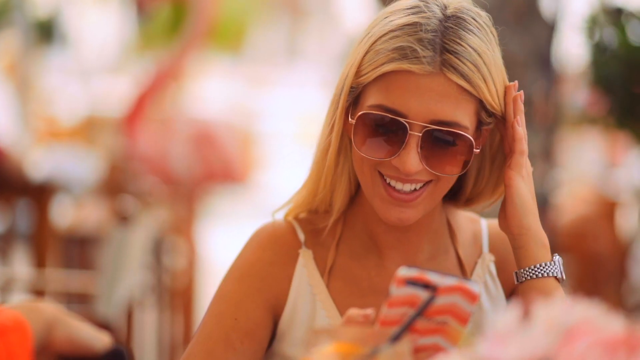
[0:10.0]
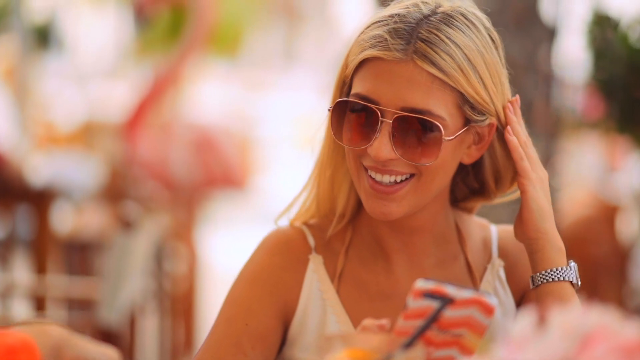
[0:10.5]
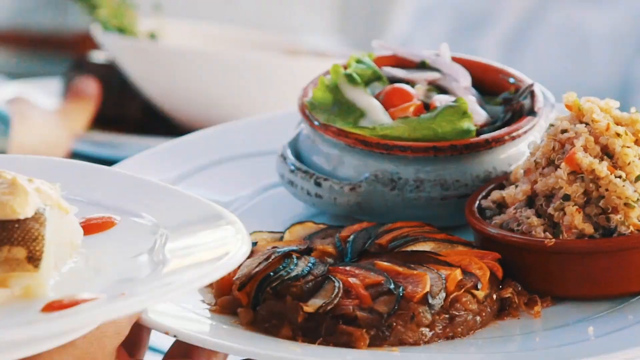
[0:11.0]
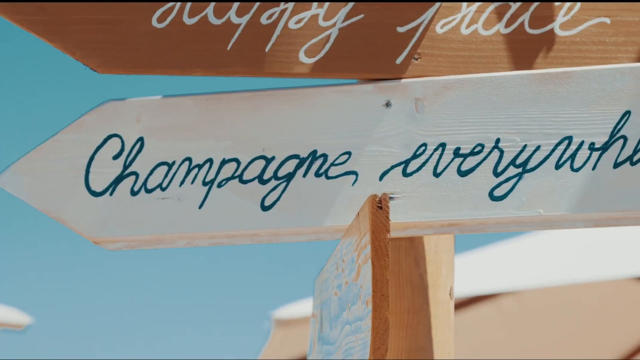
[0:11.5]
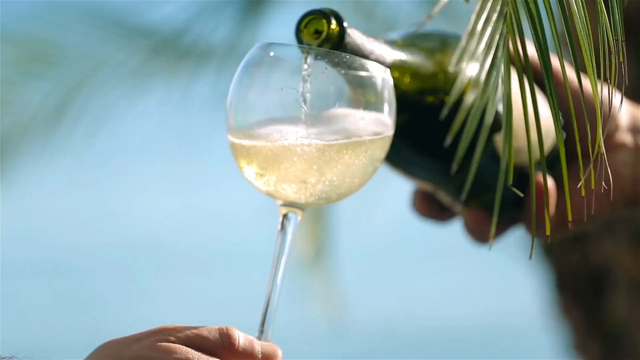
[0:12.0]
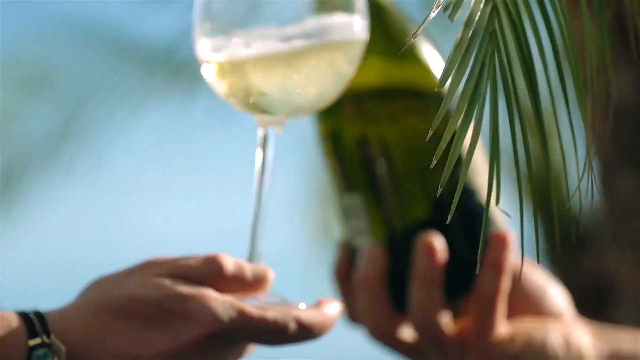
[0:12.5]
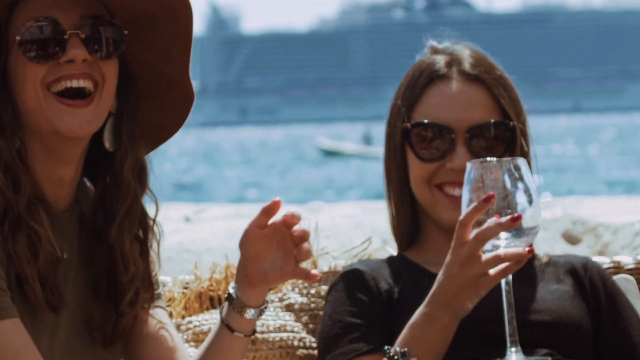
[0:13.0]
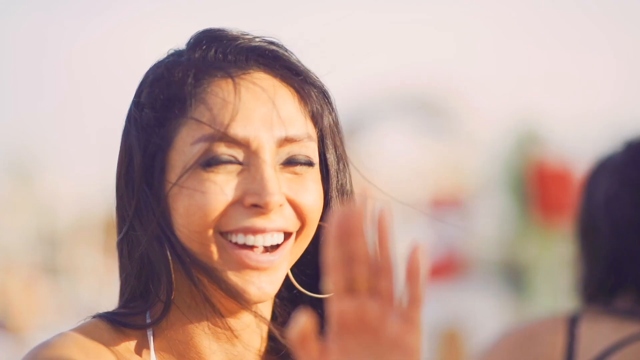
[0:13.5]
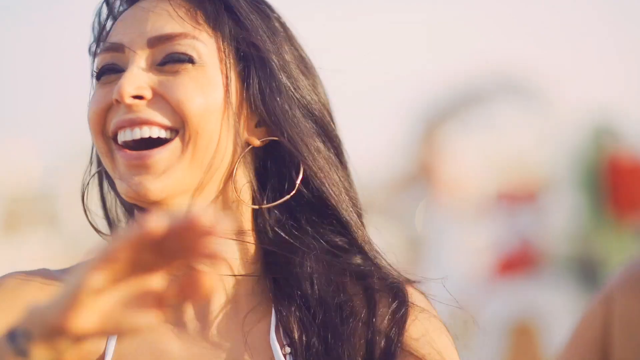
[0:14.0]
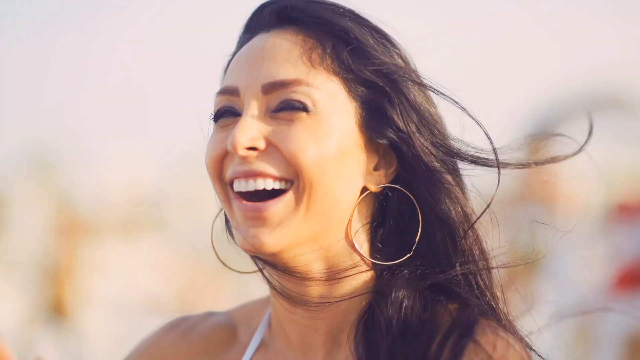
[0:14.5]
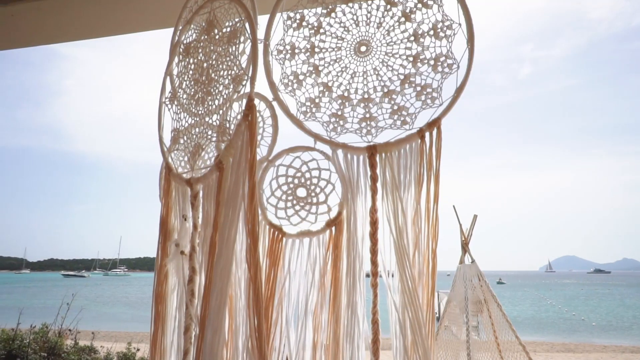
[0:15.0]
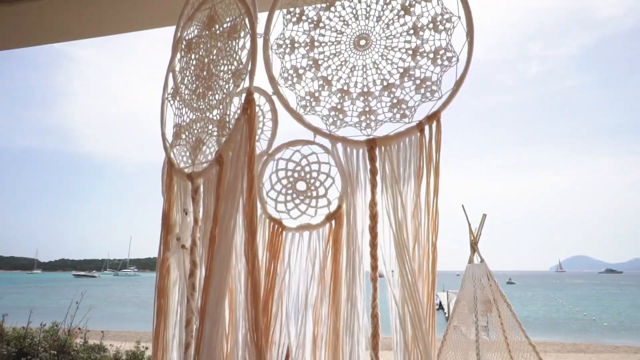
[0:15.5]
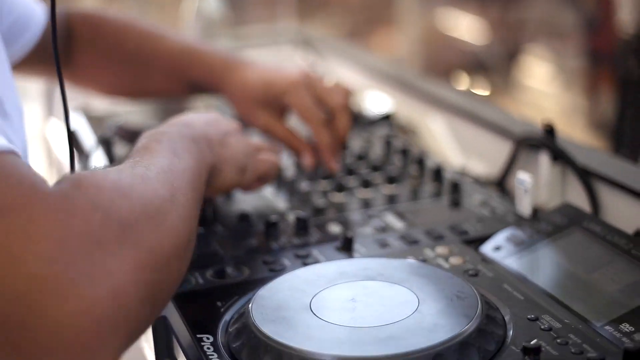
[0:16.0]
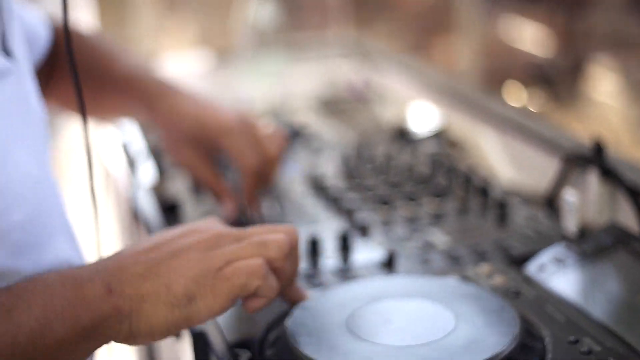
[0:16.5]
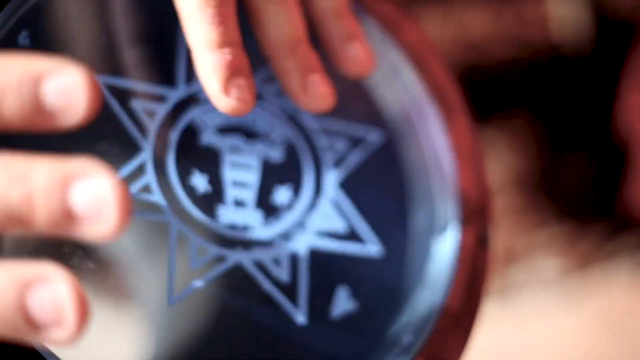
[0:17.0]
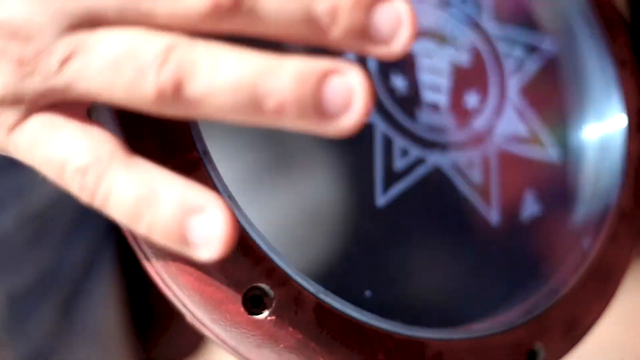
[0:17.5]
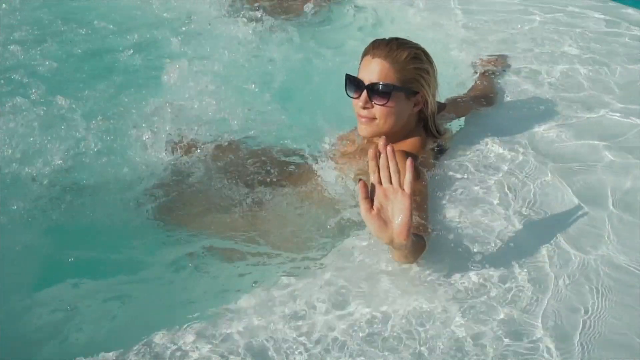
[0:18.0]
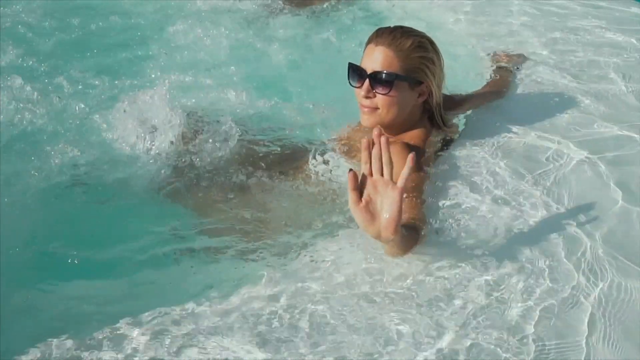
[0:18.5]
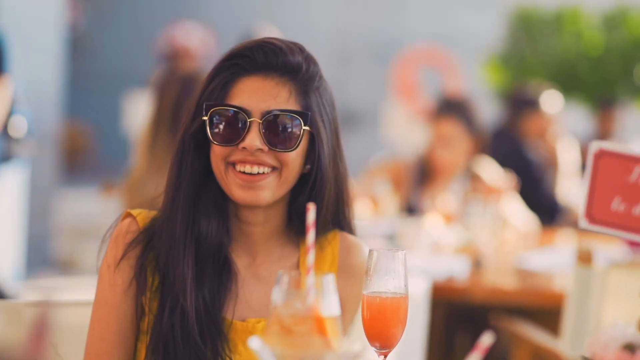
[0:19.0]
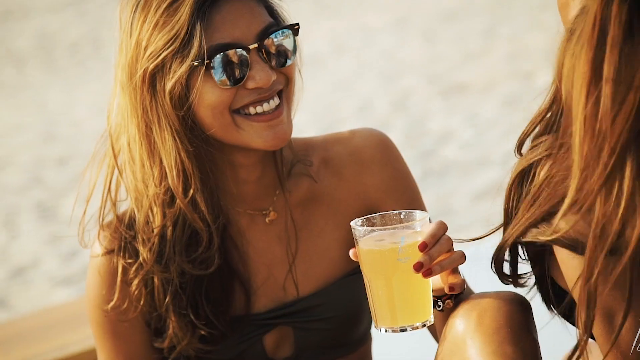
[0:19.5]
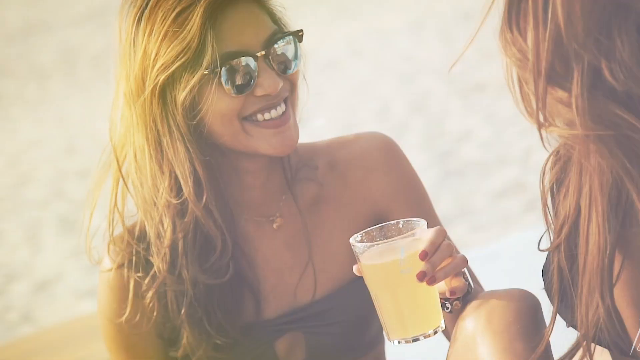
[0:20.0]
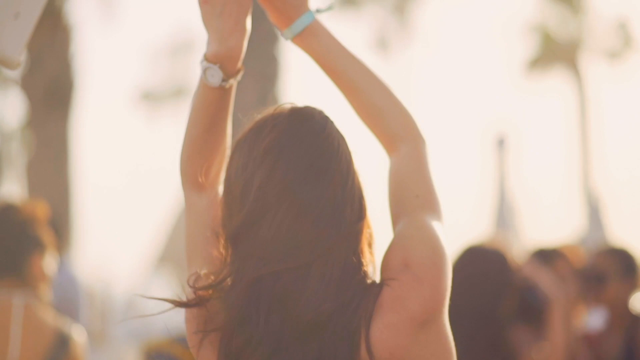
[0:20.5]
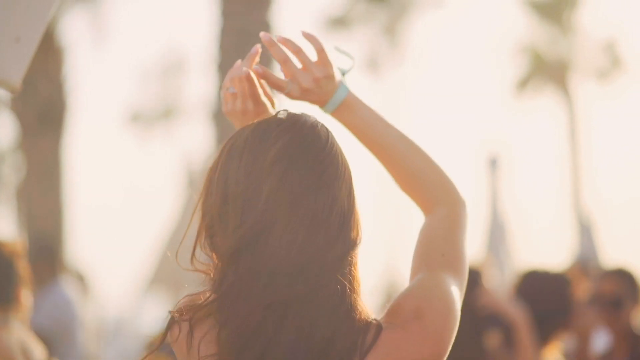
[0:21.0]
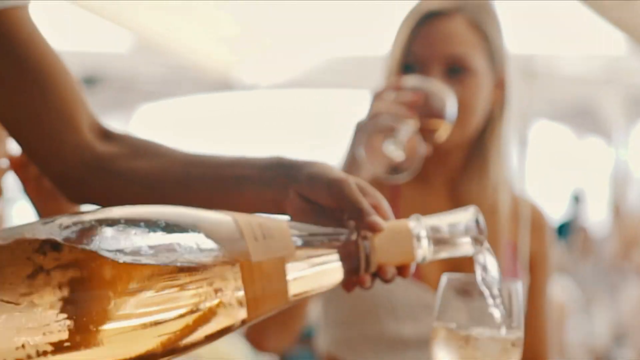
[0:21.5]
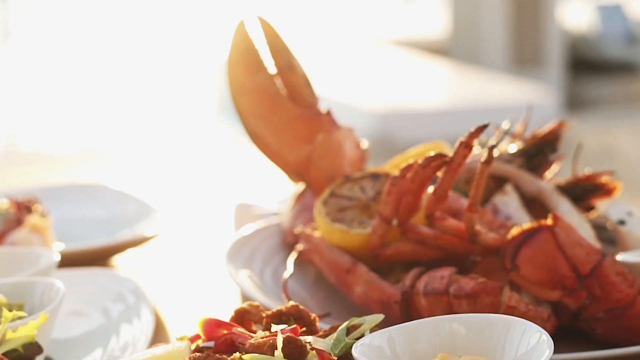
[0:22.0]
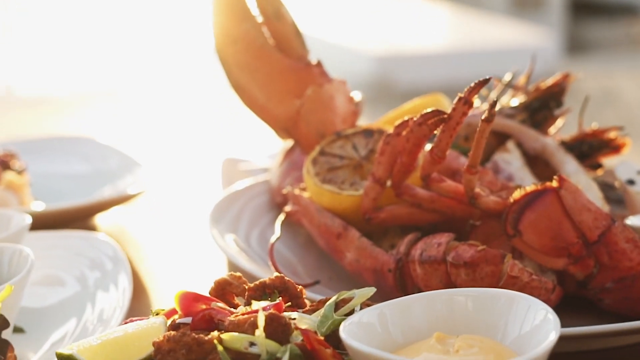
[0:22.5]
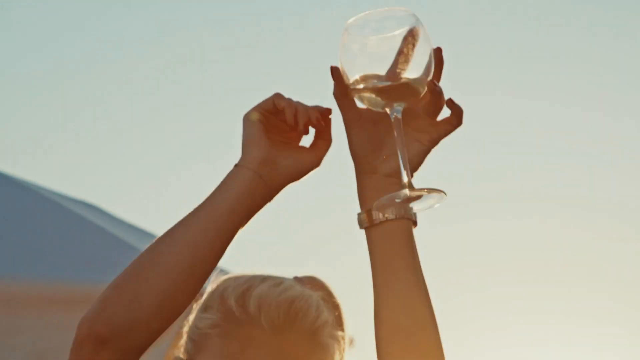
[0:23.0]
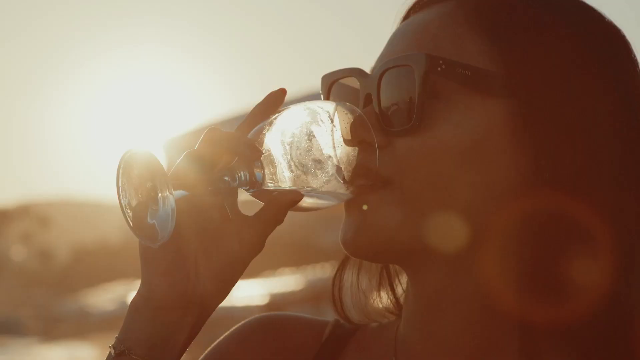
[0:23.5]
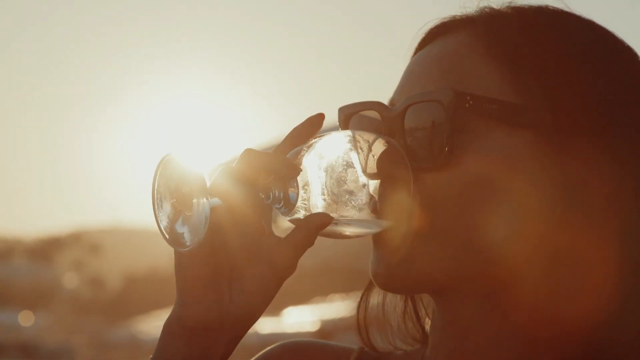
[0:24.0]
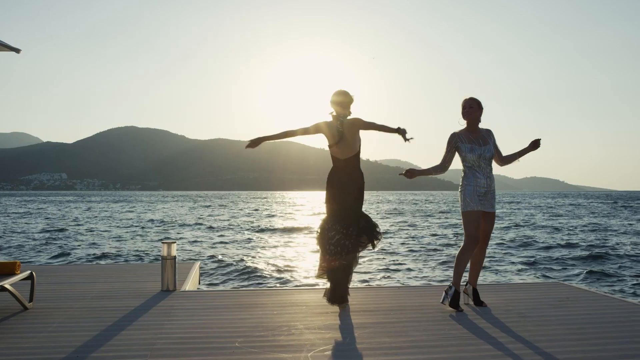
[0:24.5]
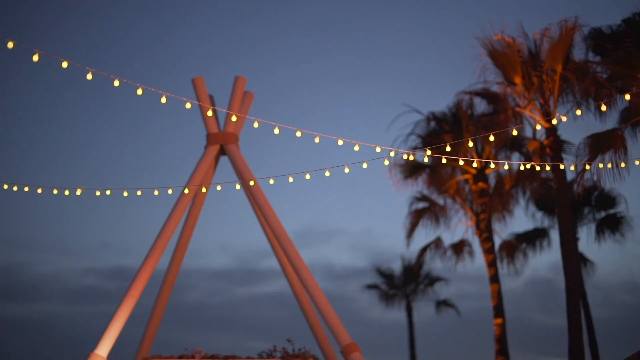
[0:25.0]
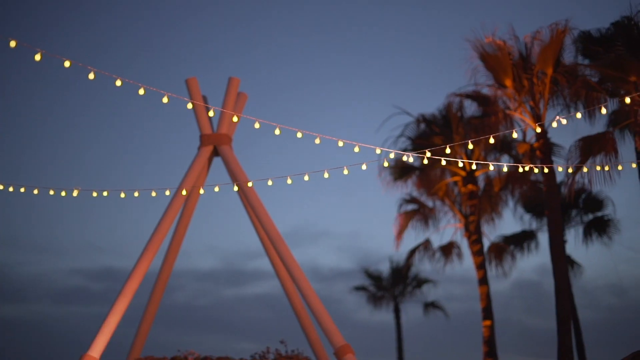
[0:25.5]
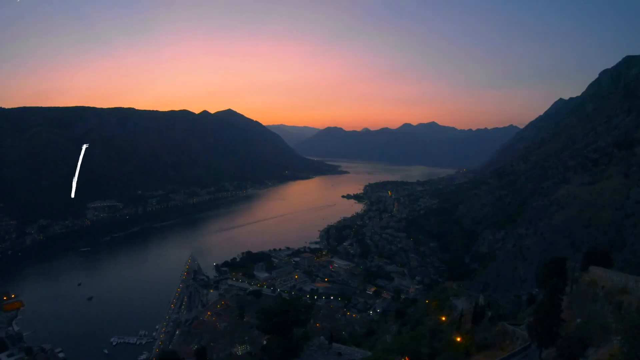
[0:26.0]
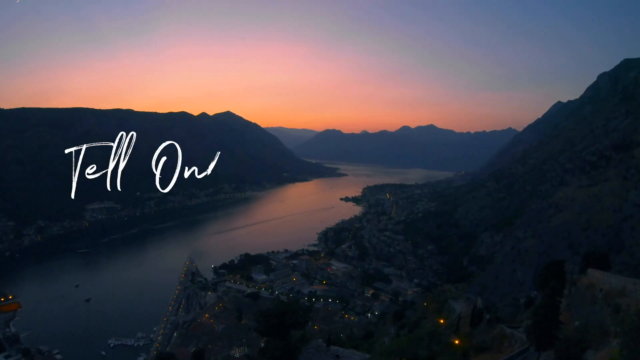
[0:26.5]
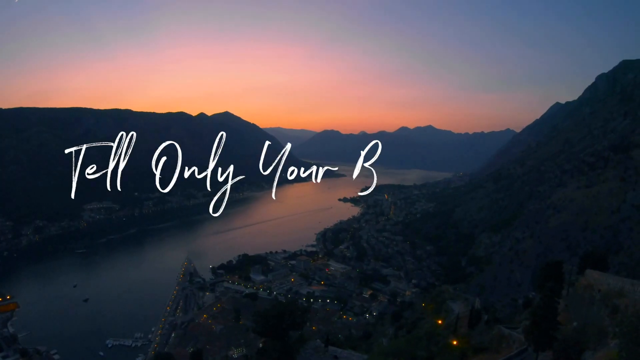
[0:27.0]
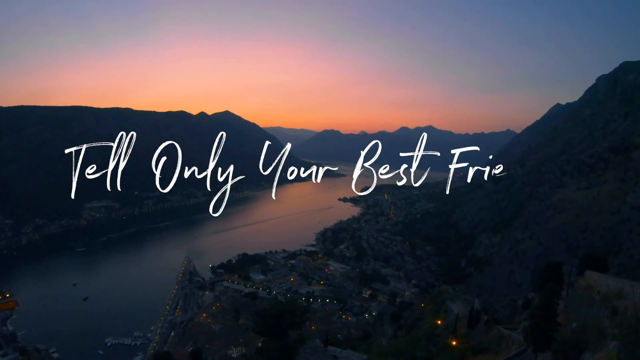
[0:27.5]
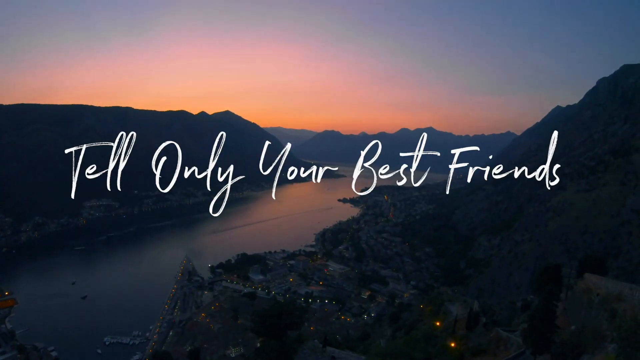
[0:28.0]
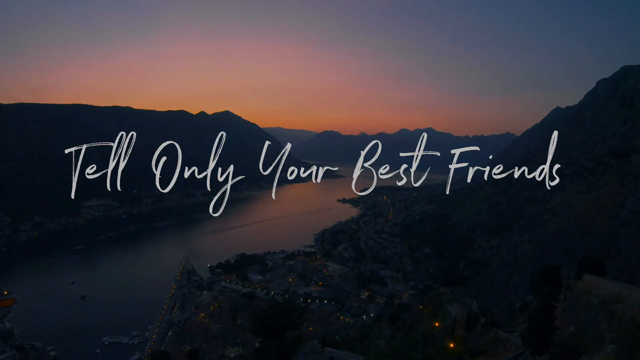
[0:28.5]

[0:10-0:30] People are having fun at the beach: a DJ plays, people dance, and people are in the water. Food and champagne are shown. Text in the video reads "tell your best friend only".